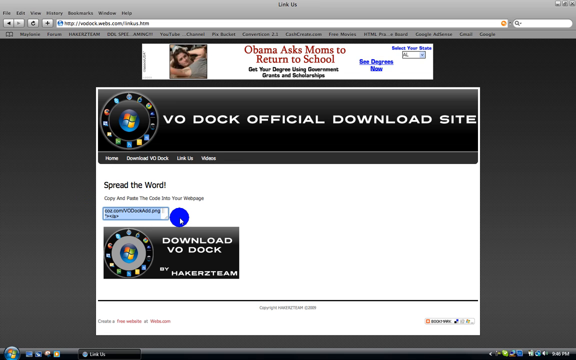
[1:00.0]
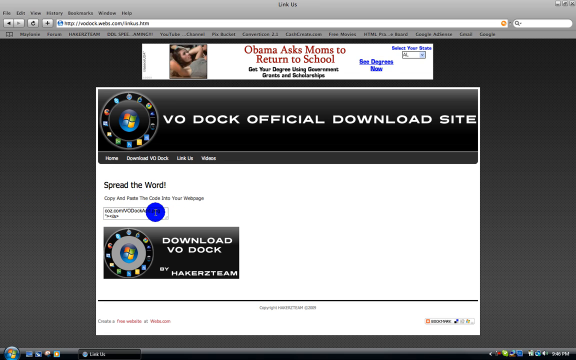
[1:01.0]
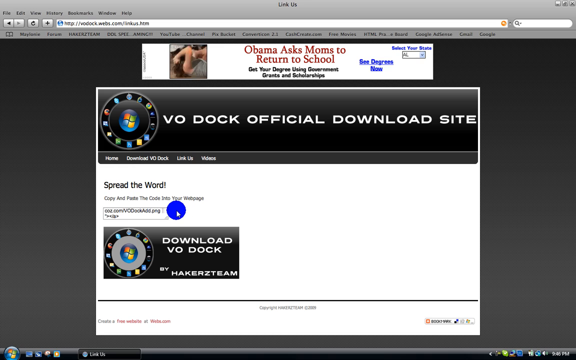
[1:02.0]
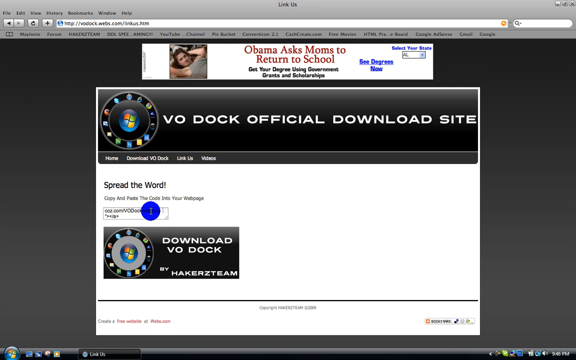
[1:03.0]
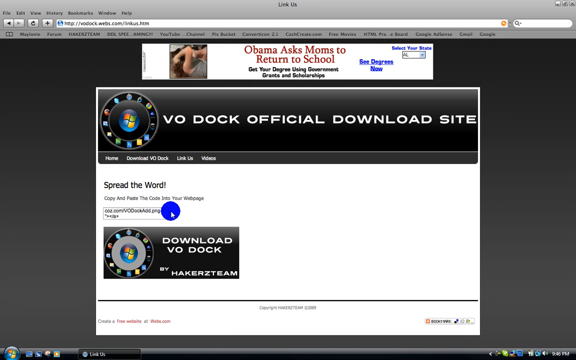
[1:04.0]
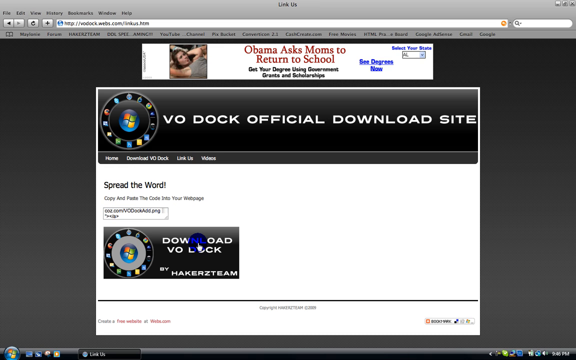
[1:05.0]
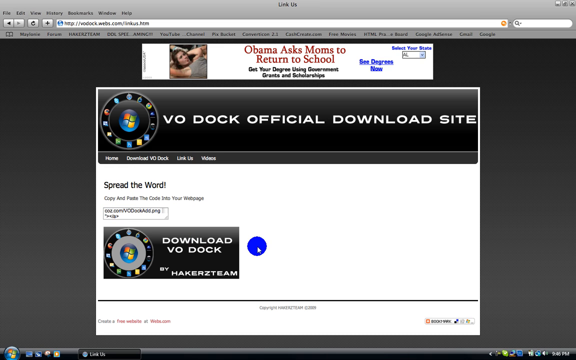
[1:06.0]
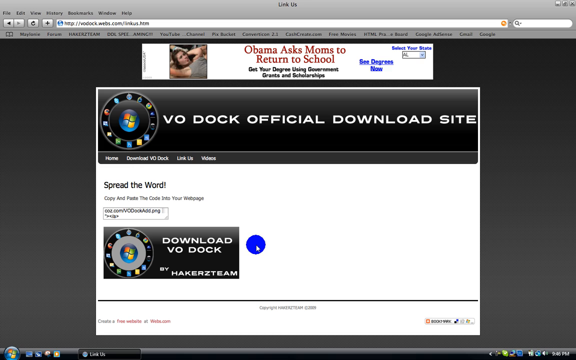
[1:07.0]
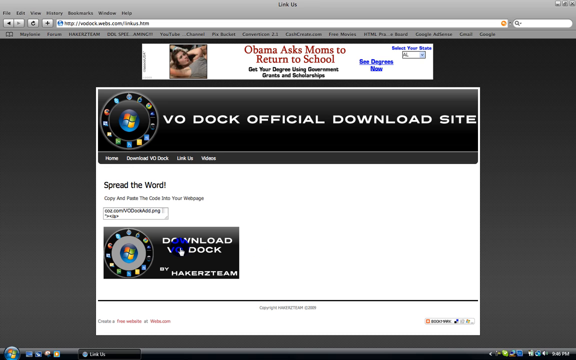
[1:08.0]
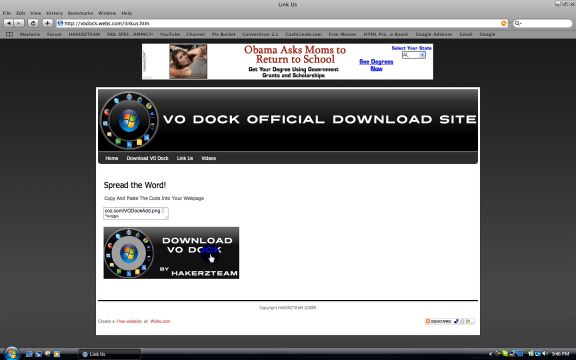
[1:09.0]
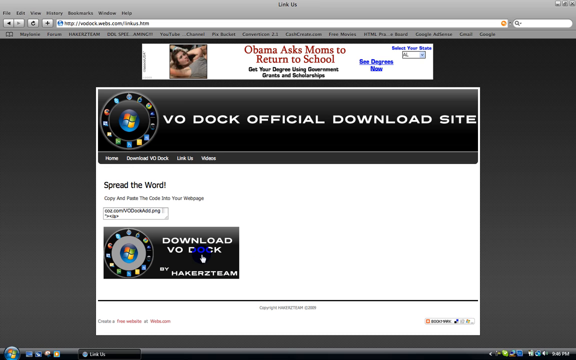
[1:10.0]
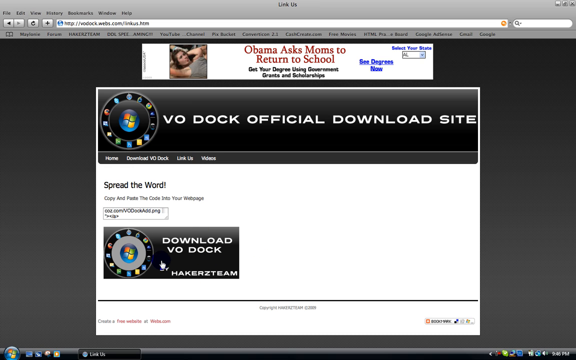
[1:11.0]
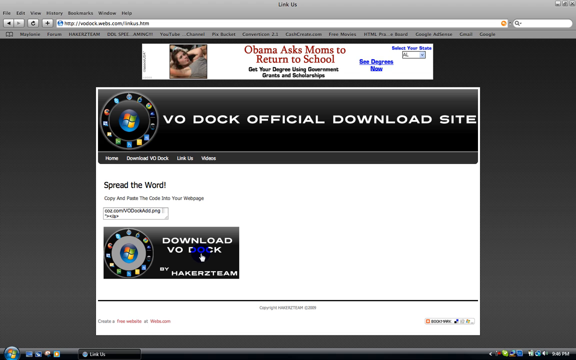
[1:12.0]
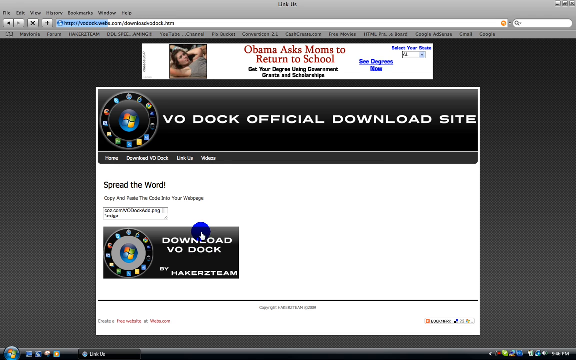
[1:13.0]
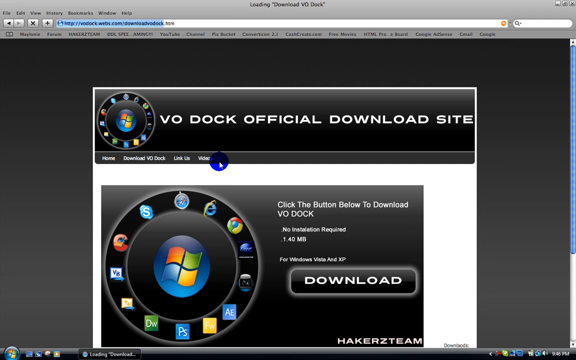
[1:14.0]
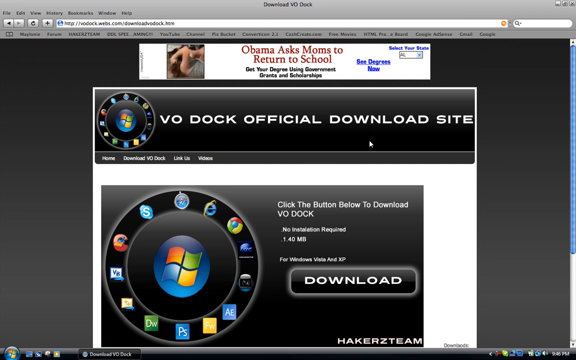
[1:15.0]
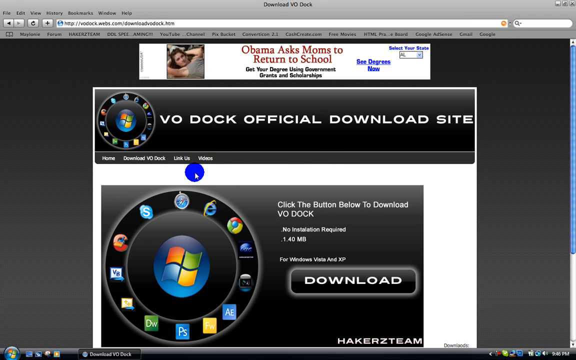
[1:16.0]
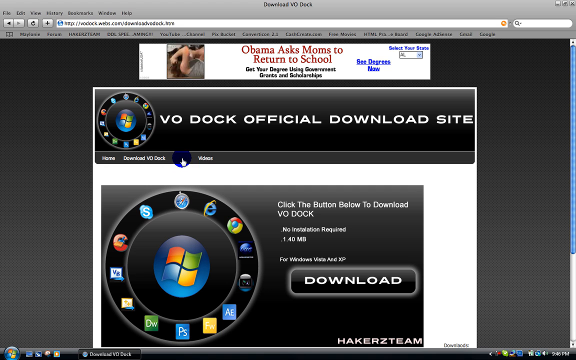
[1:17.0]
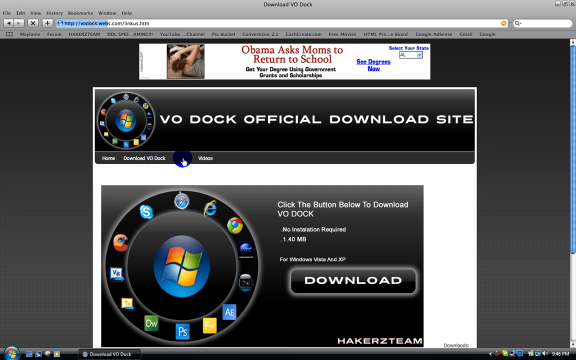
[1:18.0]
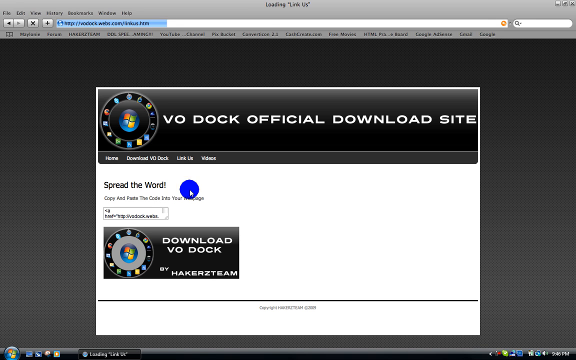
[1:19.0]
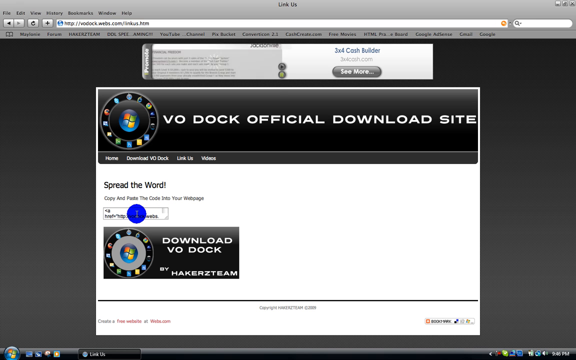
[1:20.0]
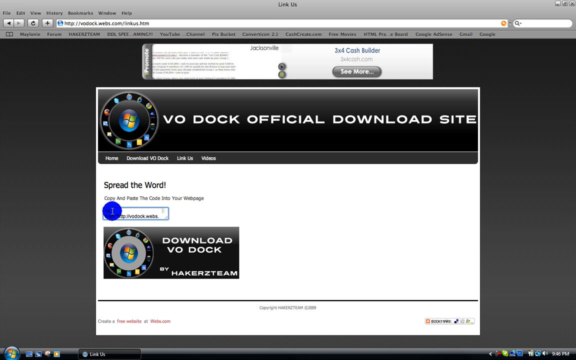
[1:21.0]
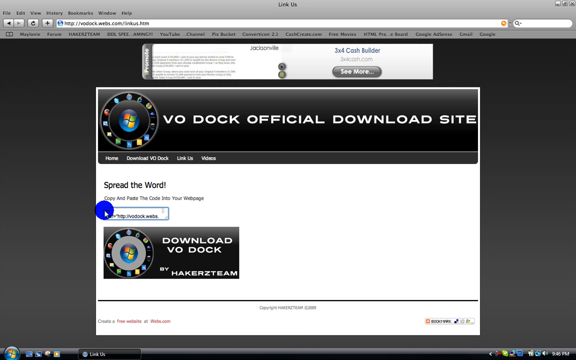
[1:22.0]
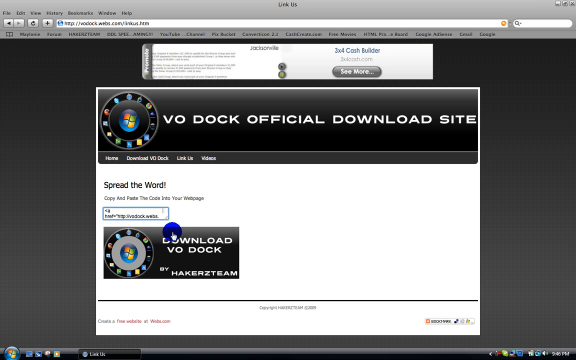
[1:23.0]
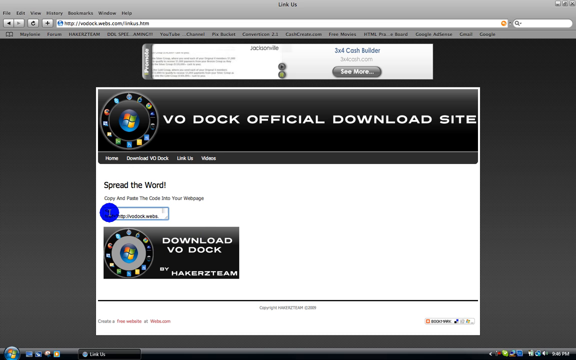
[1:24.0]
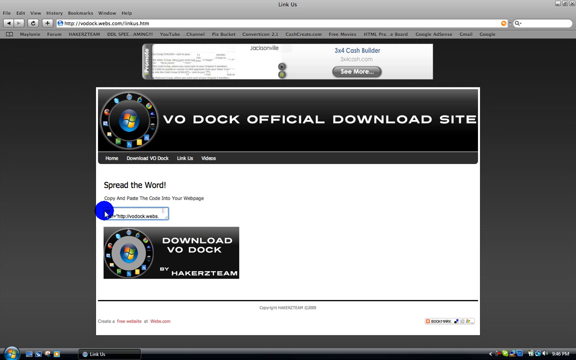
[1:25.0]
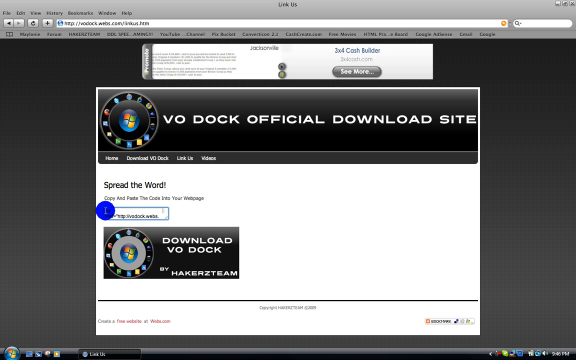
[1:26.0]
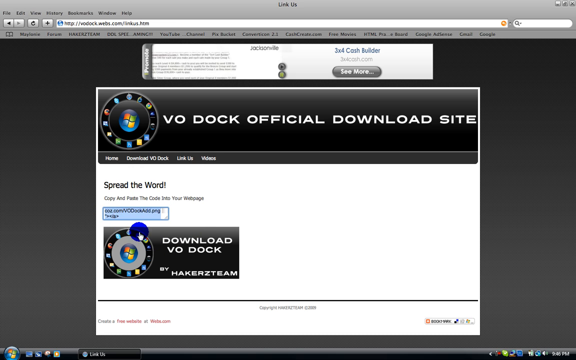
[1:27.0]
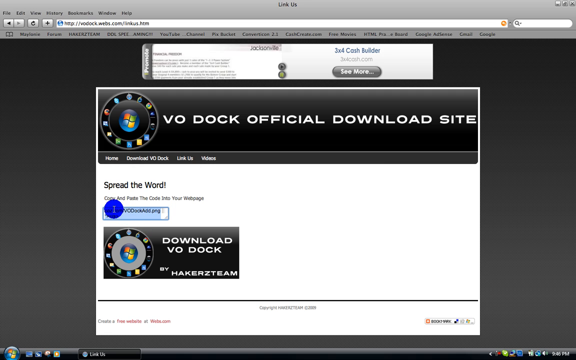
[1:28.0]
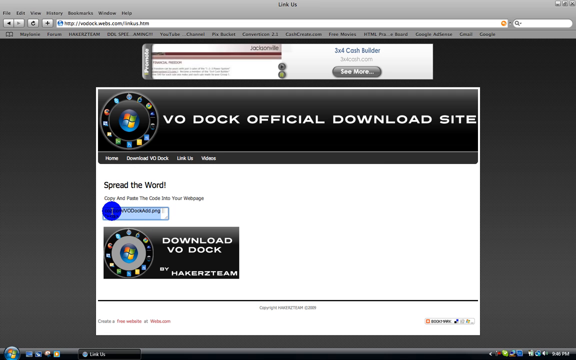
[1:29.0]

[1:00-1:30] Safari displays the VO DOCK official download site web page, with a pointer that has a blue circle around it. The mouse first hovers back and forth multiple times over "download VO Dock", which has the Windows icon surrounded by various app icons to its left, in a black box below. The download in that black box is clicked and the page loads, indicated by a light blue loader on the URL. Another download site page, the homepage, appears with ads above on a white background. The links tab, in third place on the header, is clicked, which brings back the first webpage. The code in a rectangular box is selected and copied, indicated by a light blue selection, and right-clicking on it opens a pop-up window with a copy option.